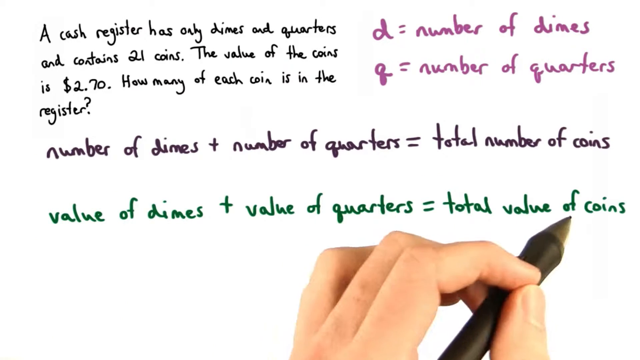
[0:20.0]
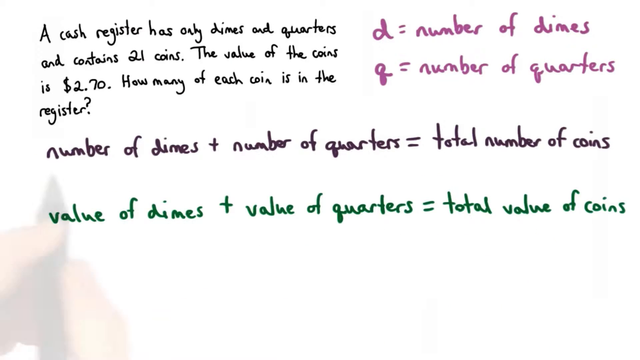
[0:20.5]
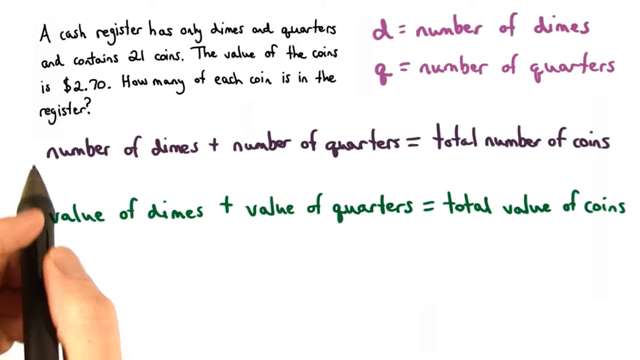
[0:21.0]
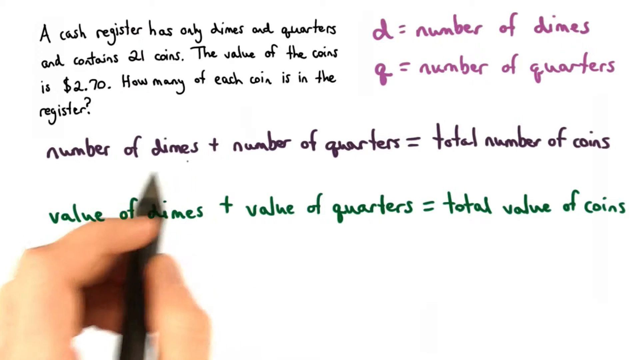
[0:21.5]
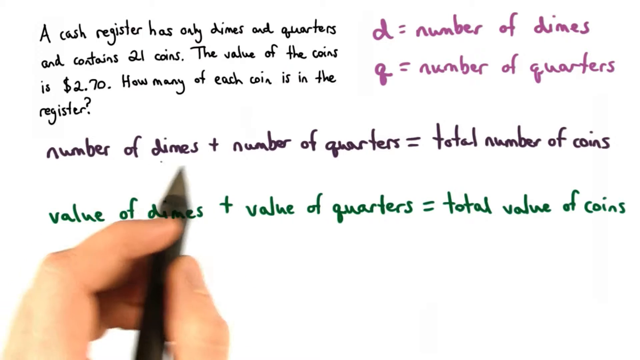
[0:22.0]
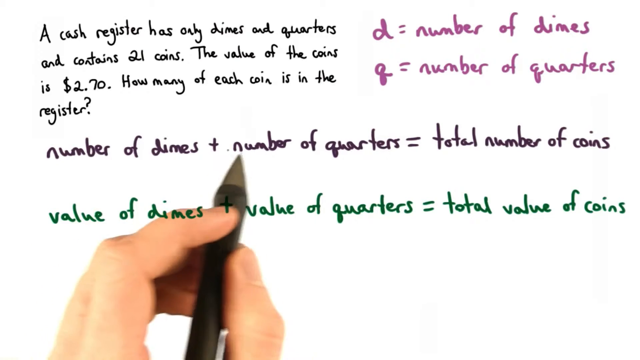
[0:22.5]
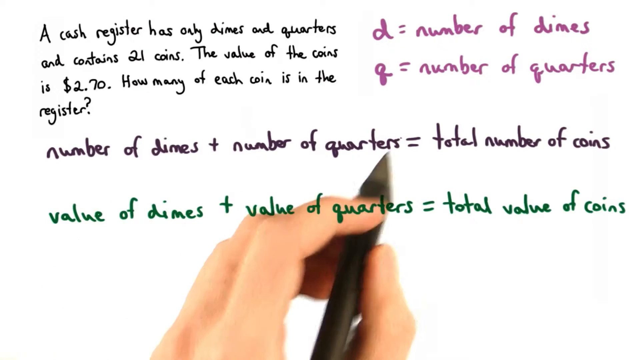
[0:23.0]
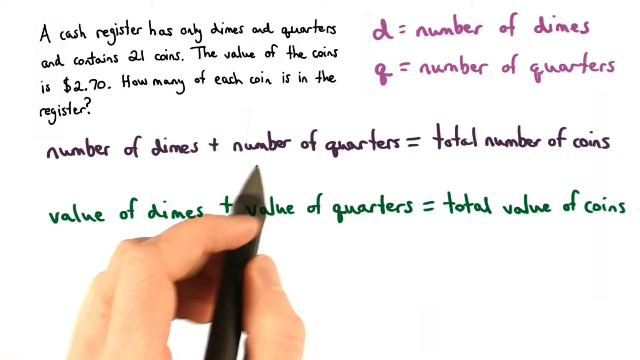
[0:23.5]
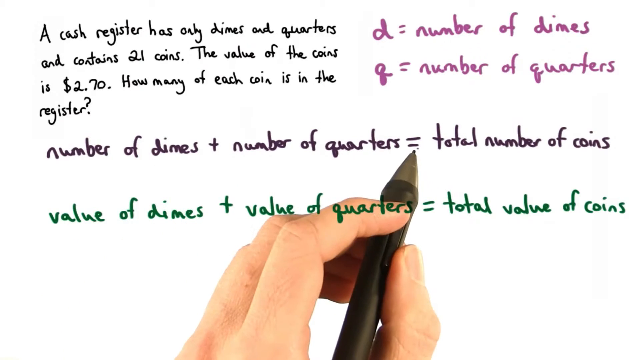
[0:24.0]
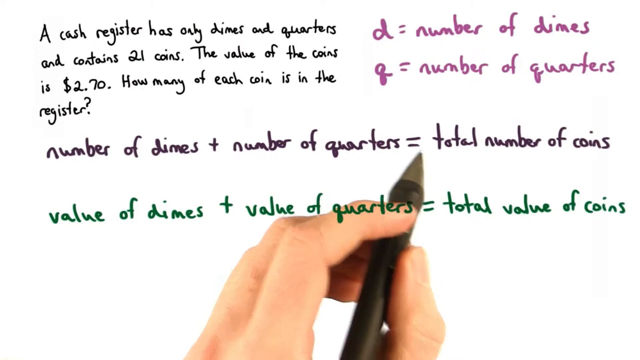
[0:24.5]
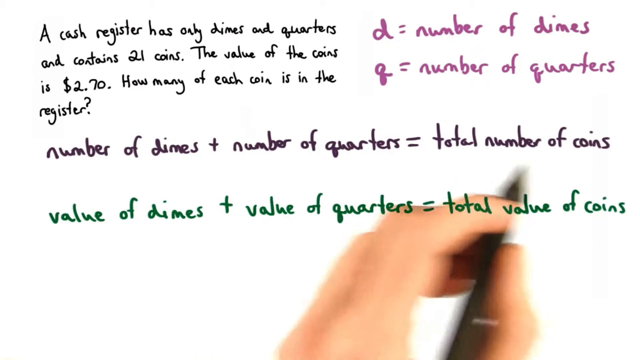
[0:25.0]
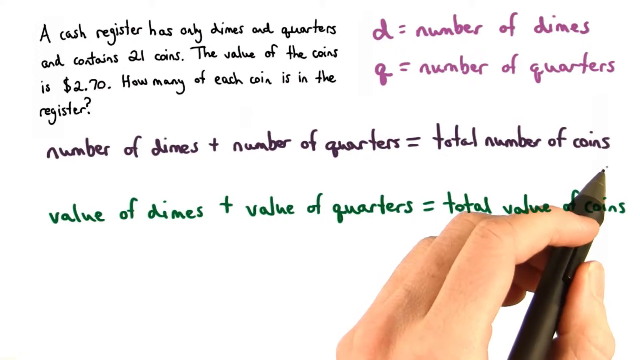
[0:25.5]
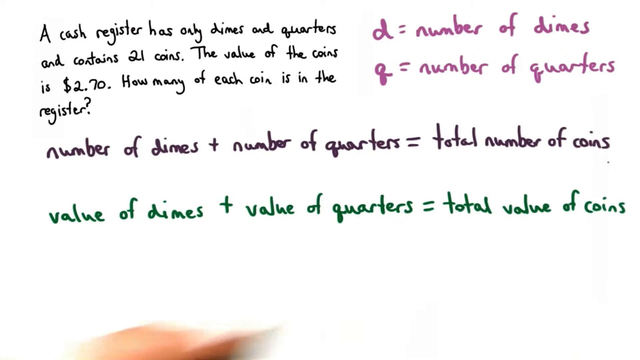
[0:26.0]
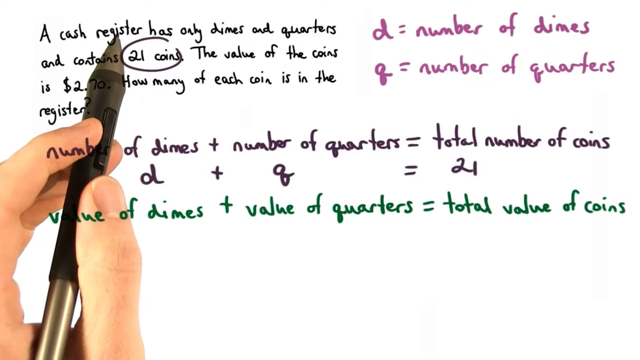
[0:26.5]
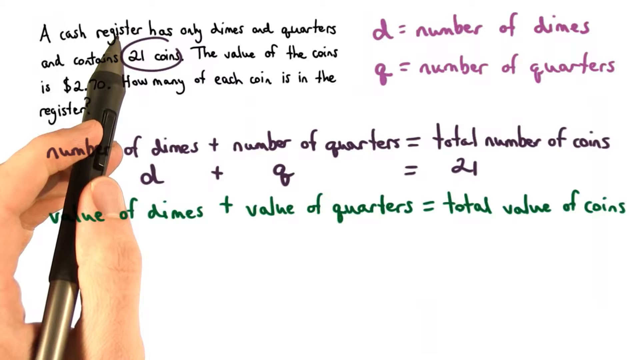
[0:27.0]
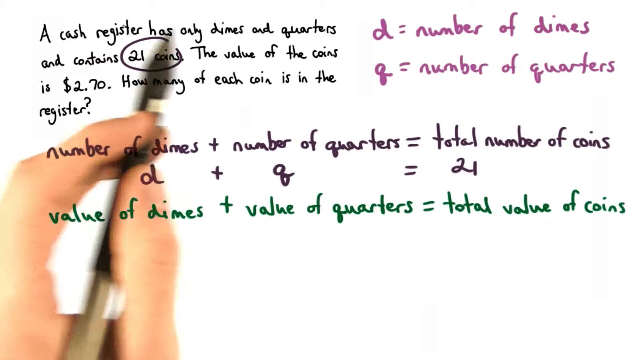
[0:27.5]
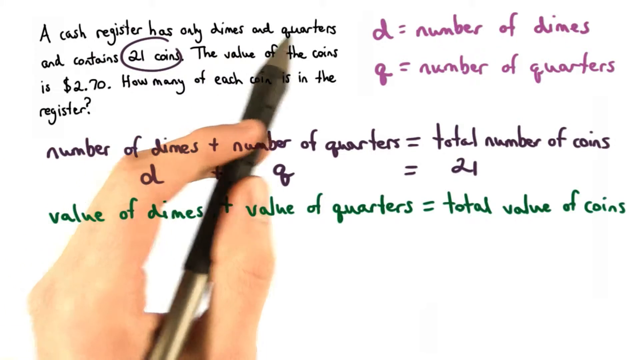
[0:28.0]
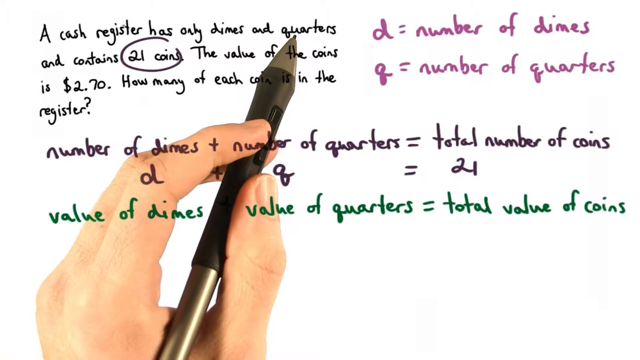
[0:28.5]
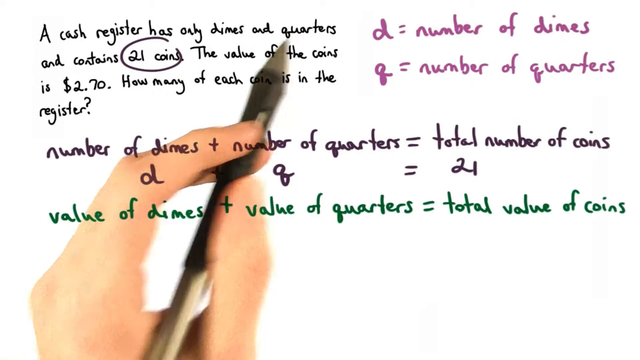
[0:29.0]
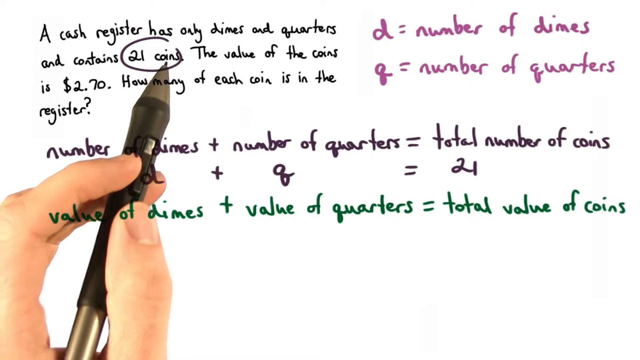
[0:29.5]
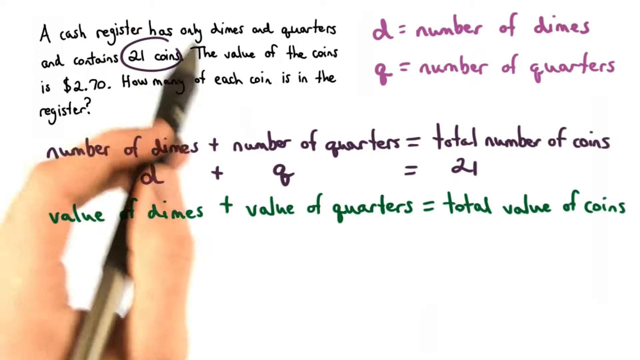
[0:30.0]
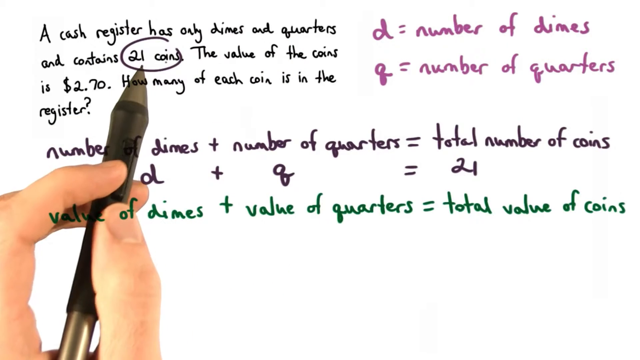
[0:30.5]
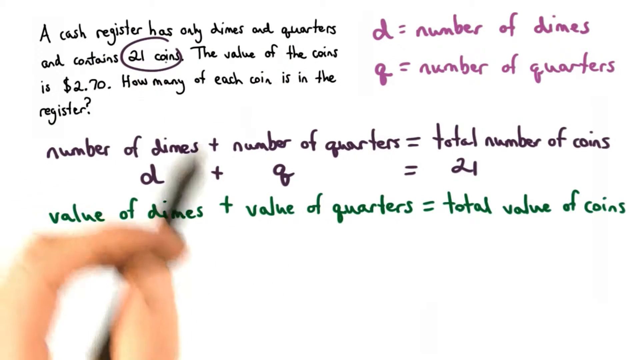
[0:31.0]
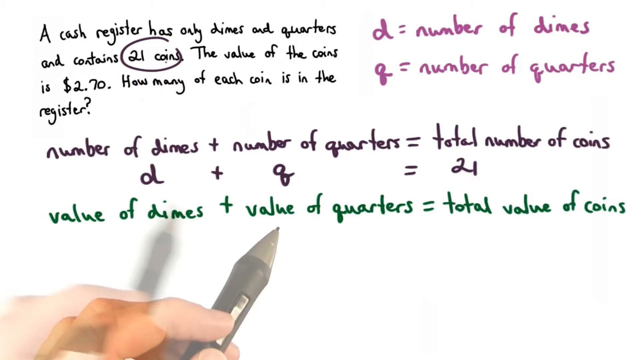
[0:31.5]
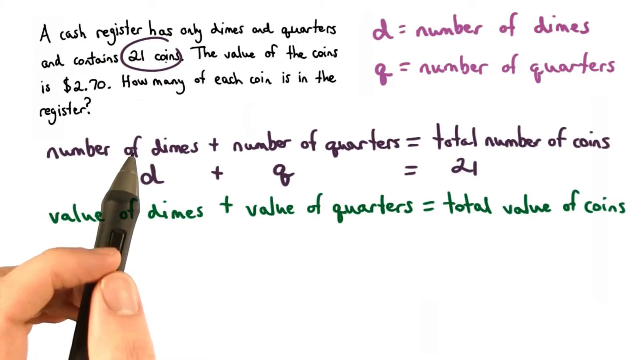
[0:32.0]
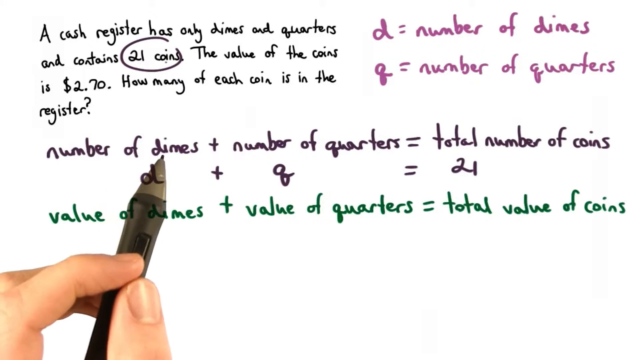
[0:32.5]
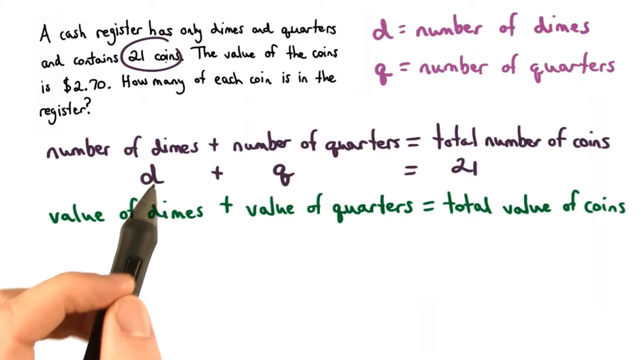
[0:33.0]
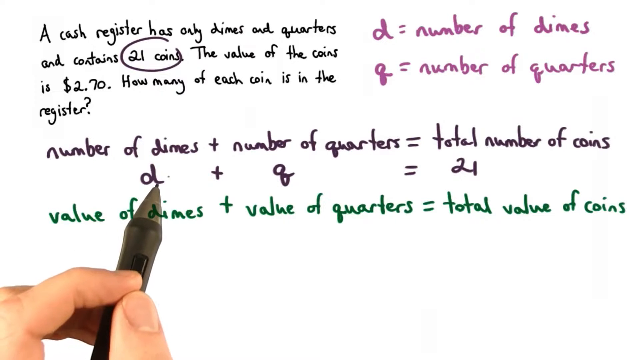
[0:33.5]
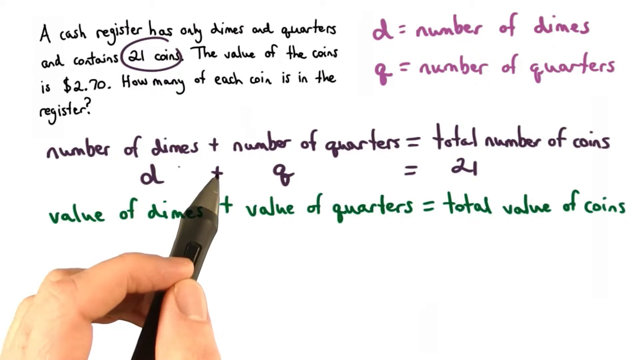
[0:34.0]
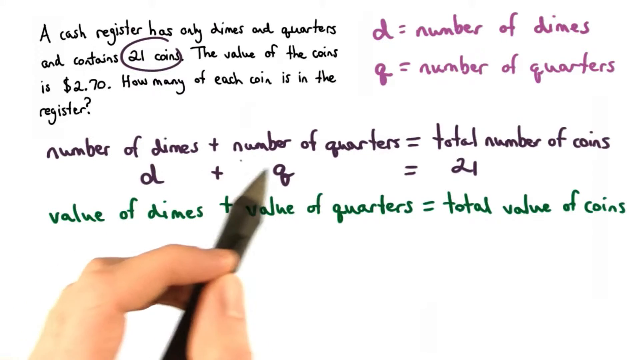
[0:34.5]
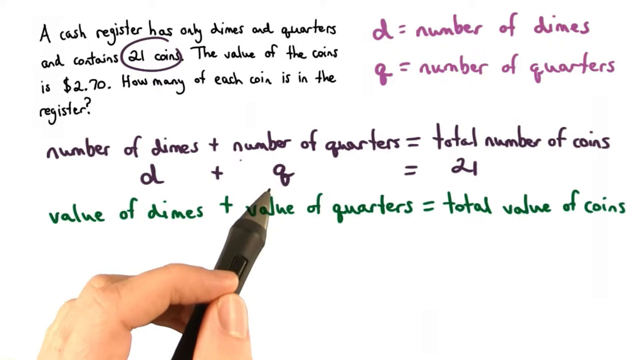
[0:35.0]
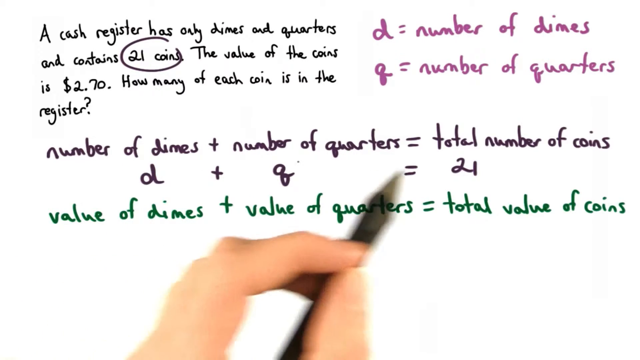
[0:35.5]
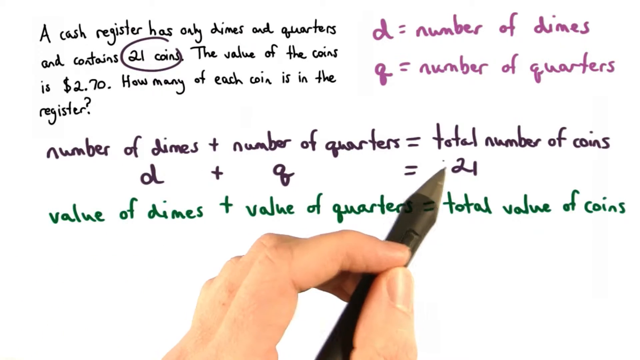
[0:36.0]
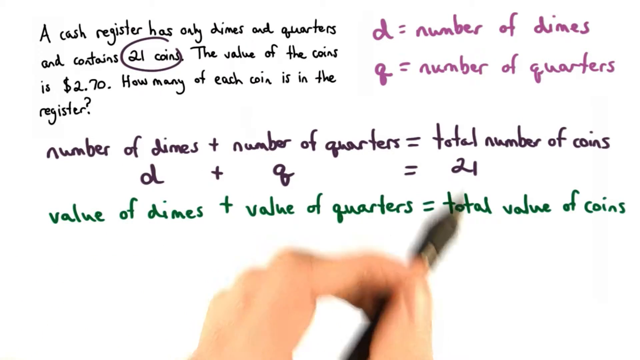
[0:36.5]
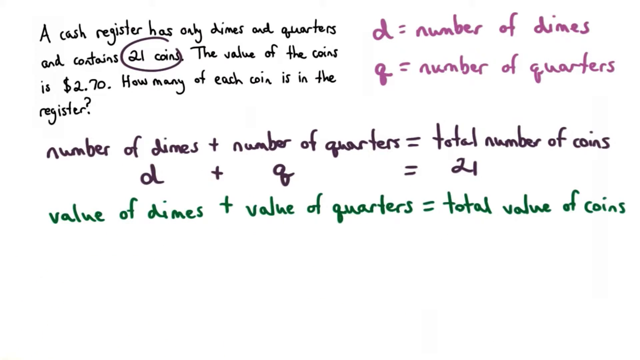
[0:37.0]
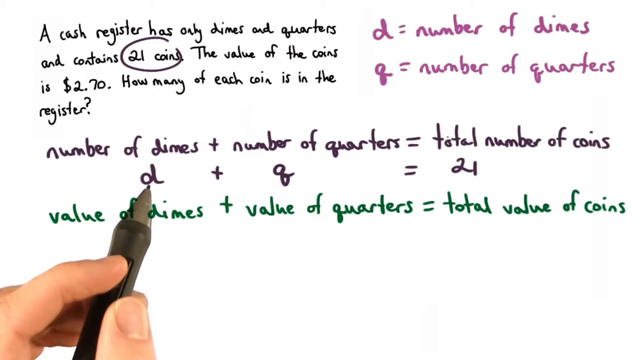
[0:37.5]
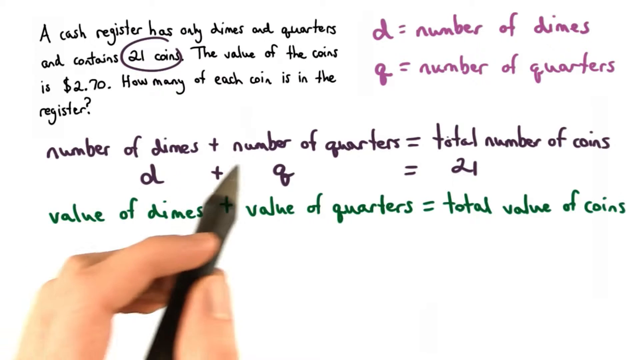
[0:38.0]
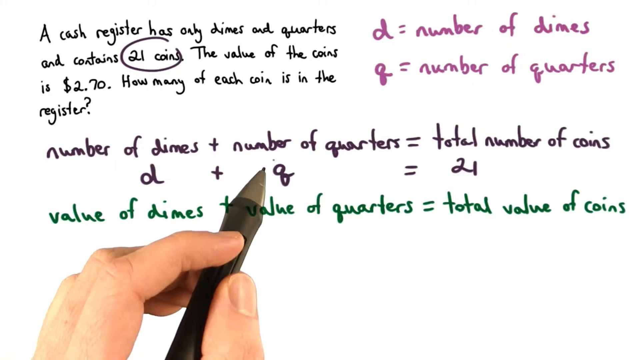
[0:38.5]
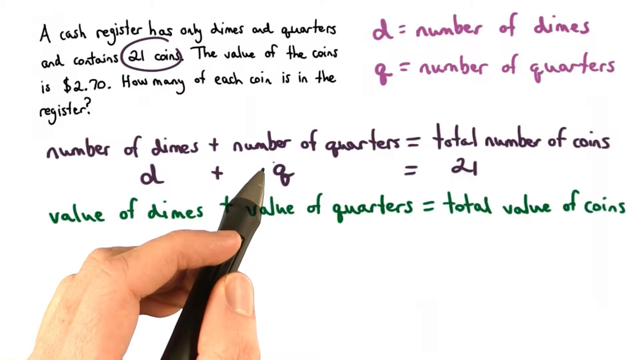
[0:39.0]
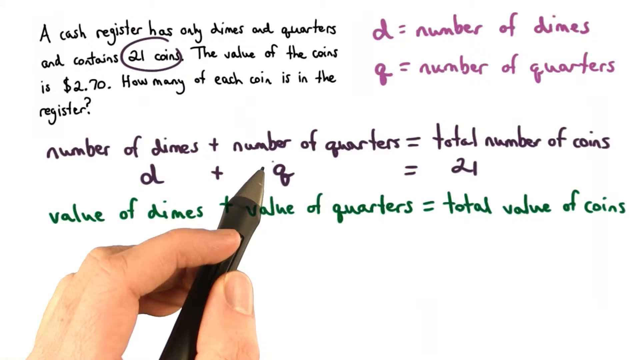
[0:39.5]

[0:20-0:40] The scene has a white background with a gradient to black toward the bottom of the screen, giving an illusion of depth. A Caucasian hand holds a black pen with what looks like a brass-colored tip. The text in the upper left reads "a cash register has only dimes and quarters and contains 21 coins. The value of the coins is $2.70. How many of each coin is in the register?" In purple in the upper right quadrant it says "d = number of dimes" and beneath that "q = number of quarters", all in lowercase. Beneath that, in black, it says "number of dimes + number of quarters = total number of coins", and the statement is echoed in green below it. The pen points at the green "of", pulls away, then fades back in at the lower left of the screen and circles around the black "number of dimes" and "number of quarters", then moves beneath "total number of coins" to emphasize it. The hand fades out and back in. The screen is visibly a projection, since some of the letters are projected across the hand when the pen and hand are above the screen. Beneath "number of dimes + number of quarters" there is now "d + q = 21", converting the statement into an equation, and "21 coins" in the problem has been circled to show where that number comes from. The pen moves in a circular motion around that circle, then moves down to "number of dimes" and the d, over to the q, and over to the 21, pointing at each without marking anything.